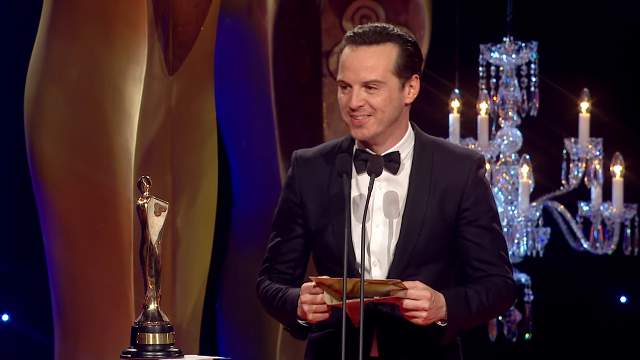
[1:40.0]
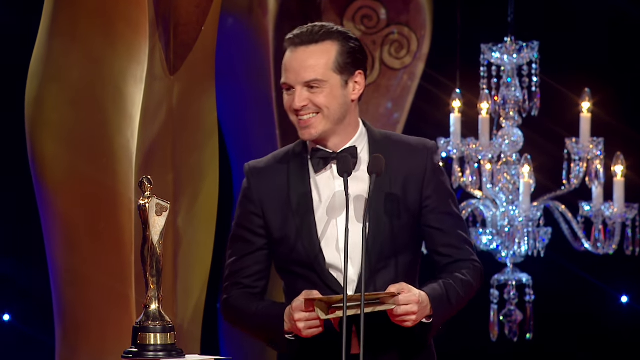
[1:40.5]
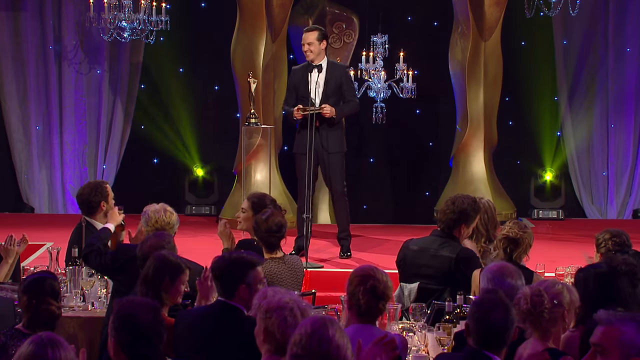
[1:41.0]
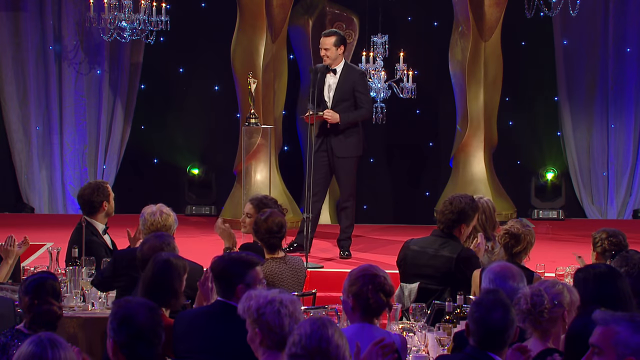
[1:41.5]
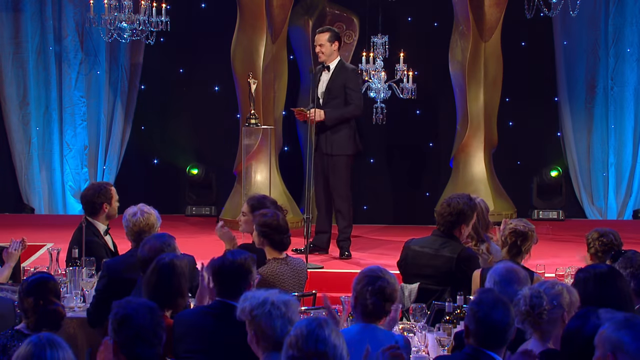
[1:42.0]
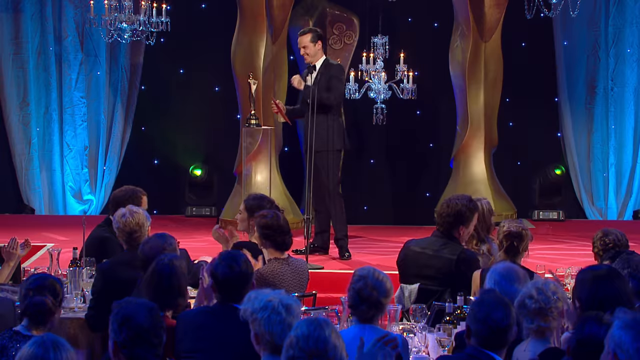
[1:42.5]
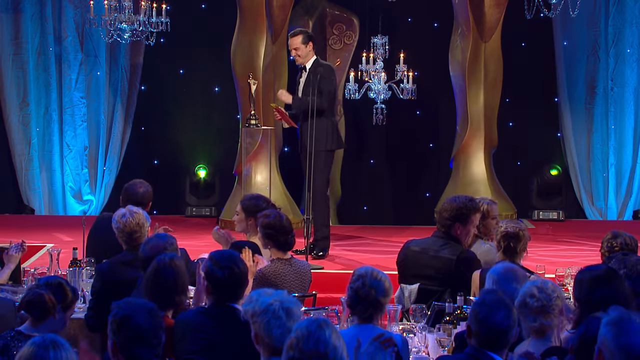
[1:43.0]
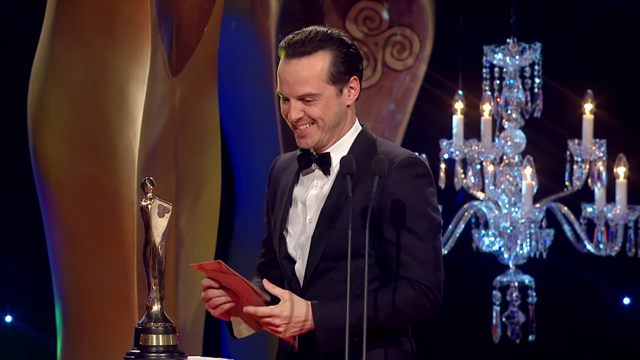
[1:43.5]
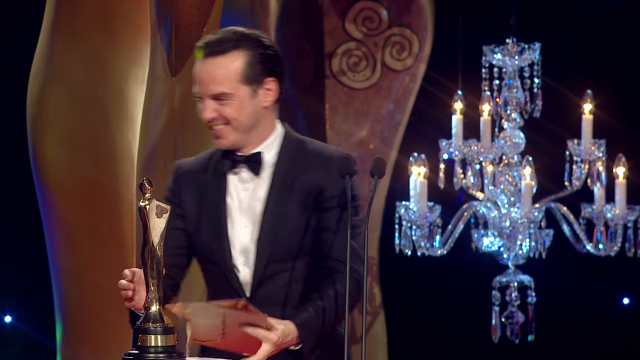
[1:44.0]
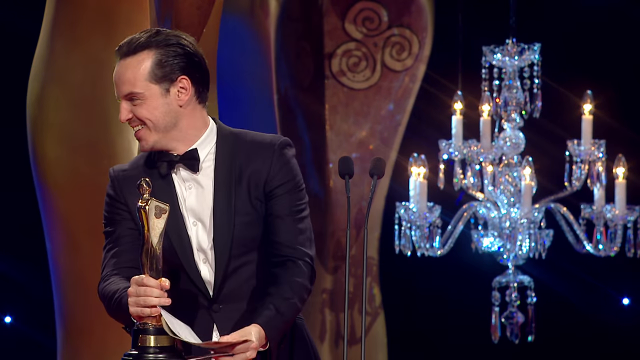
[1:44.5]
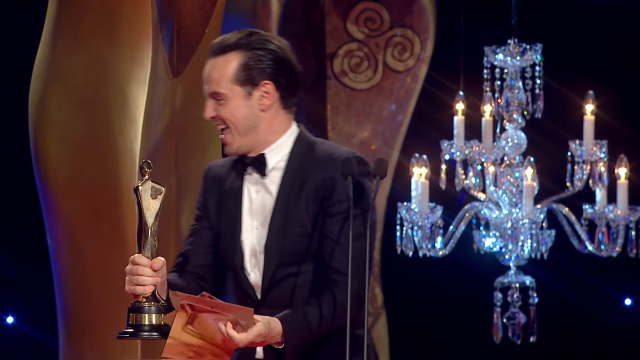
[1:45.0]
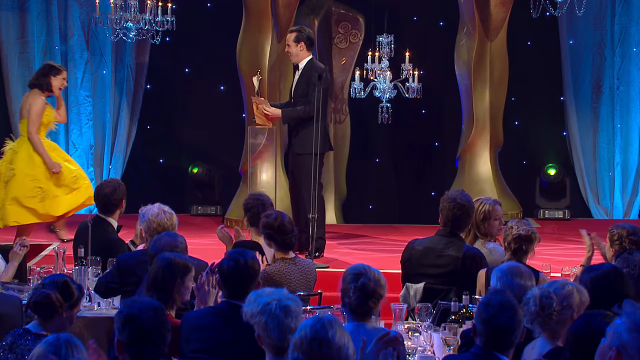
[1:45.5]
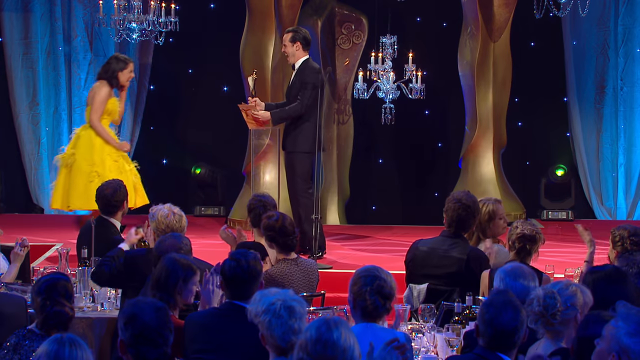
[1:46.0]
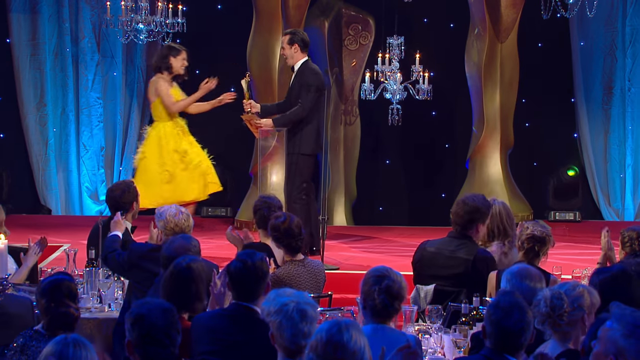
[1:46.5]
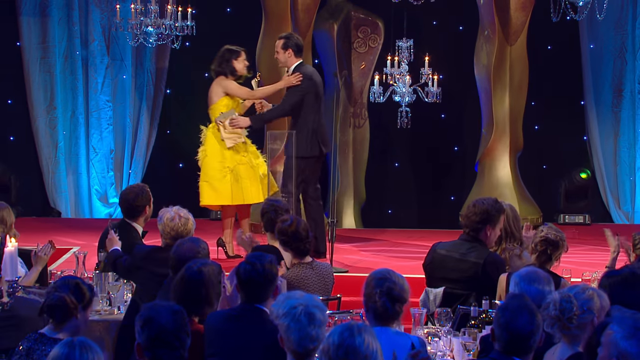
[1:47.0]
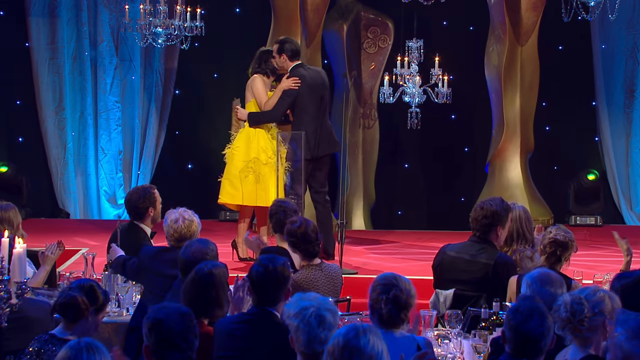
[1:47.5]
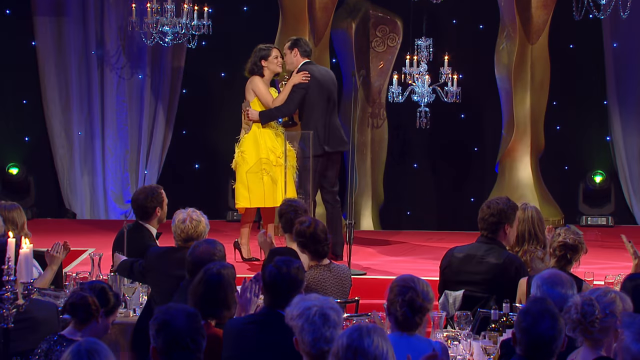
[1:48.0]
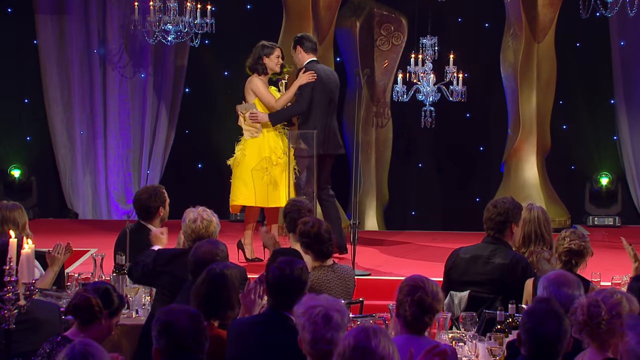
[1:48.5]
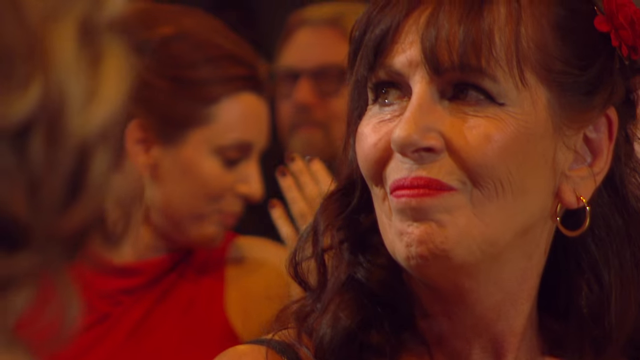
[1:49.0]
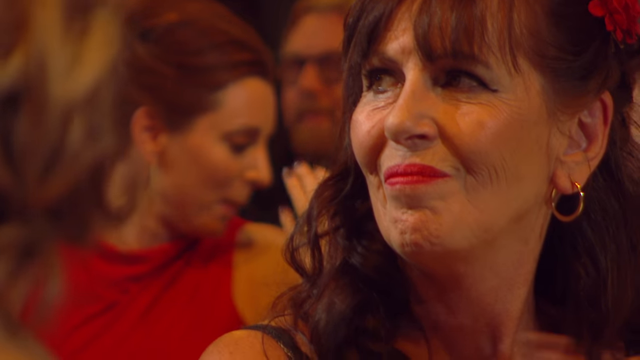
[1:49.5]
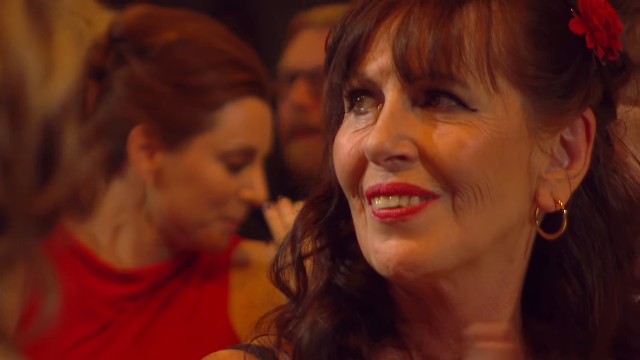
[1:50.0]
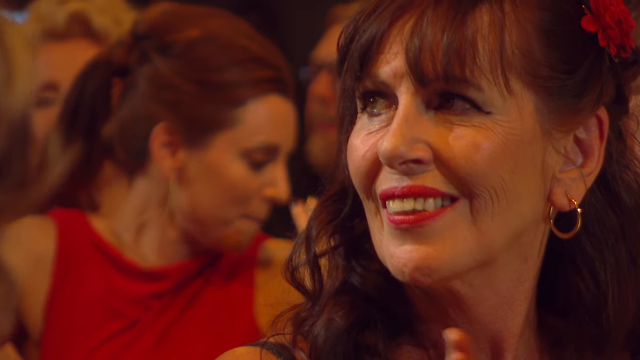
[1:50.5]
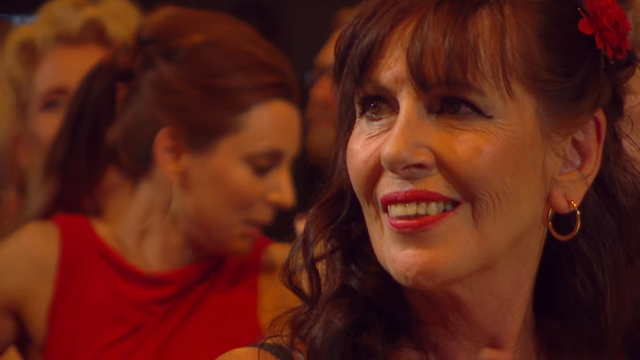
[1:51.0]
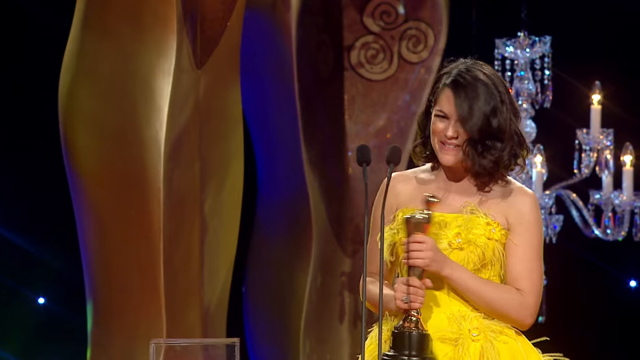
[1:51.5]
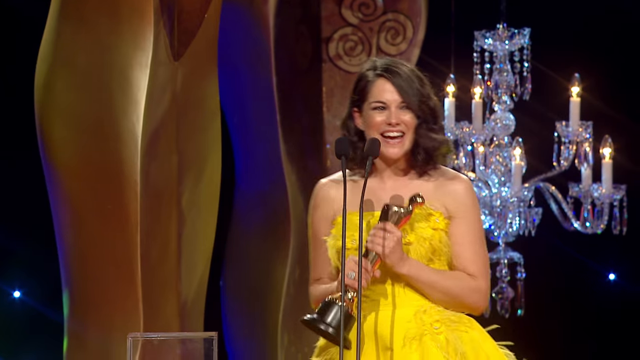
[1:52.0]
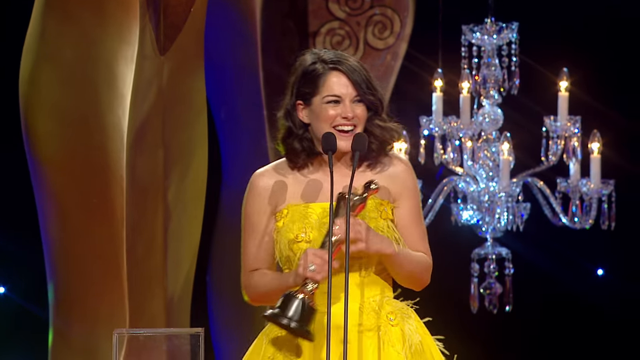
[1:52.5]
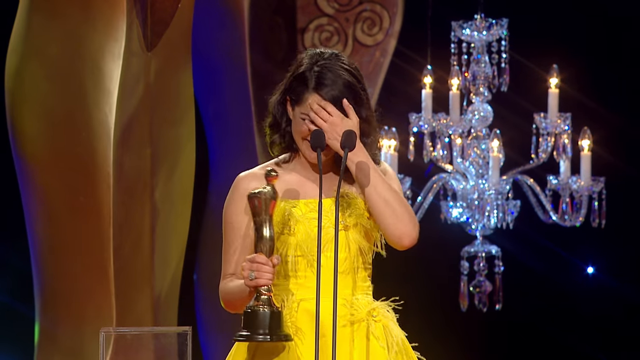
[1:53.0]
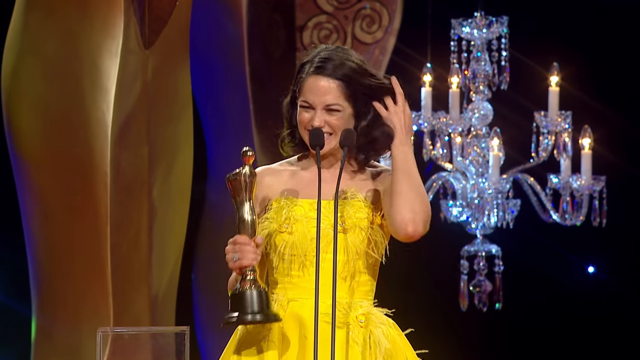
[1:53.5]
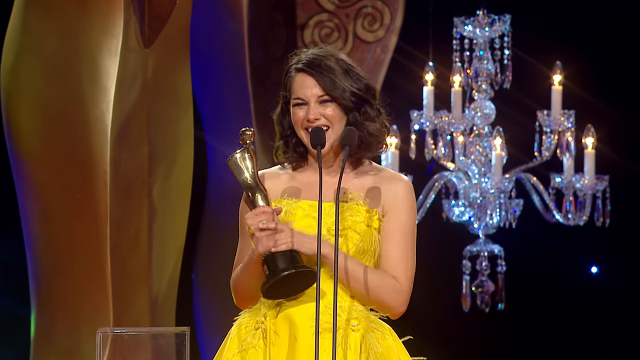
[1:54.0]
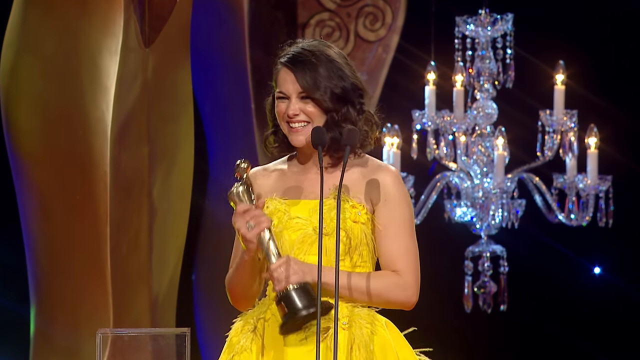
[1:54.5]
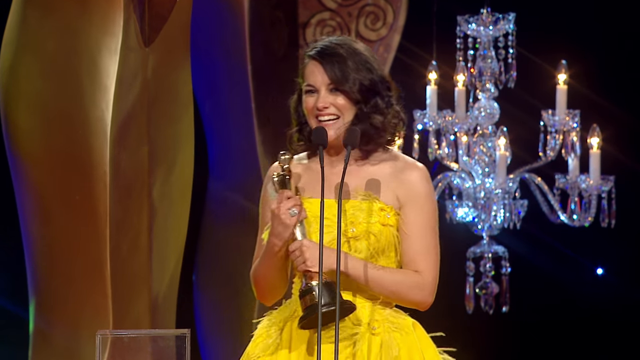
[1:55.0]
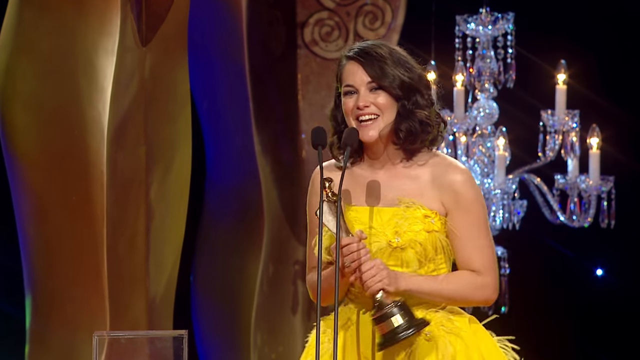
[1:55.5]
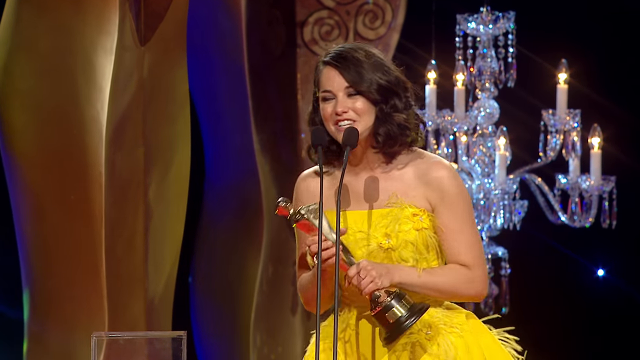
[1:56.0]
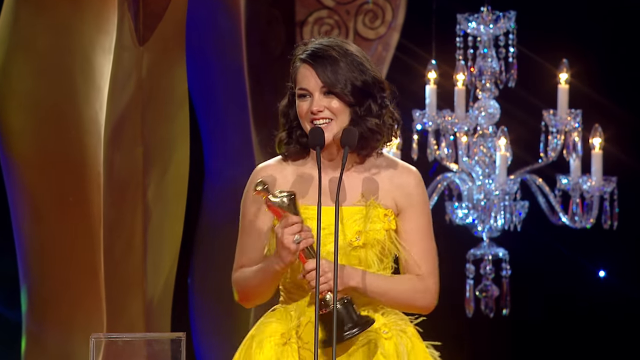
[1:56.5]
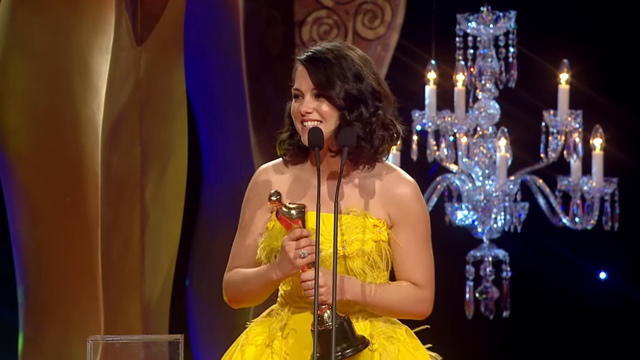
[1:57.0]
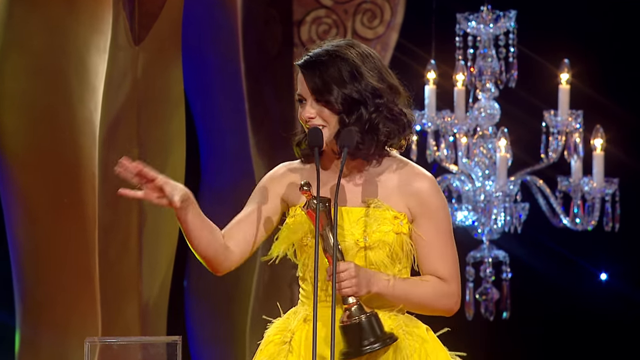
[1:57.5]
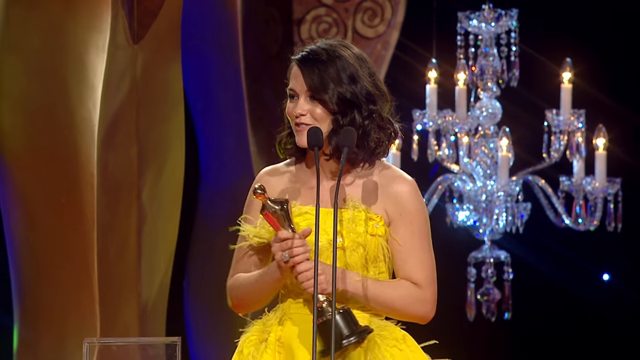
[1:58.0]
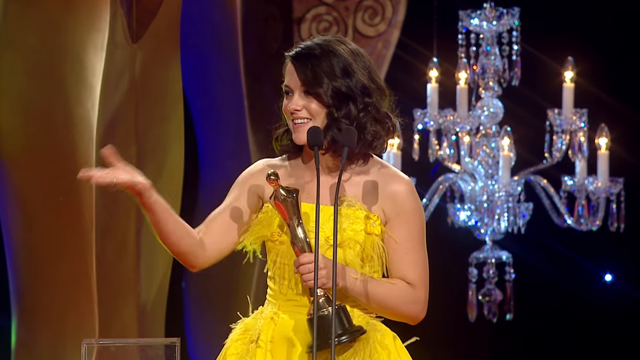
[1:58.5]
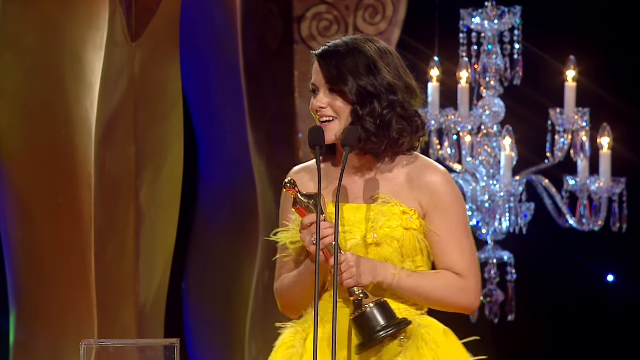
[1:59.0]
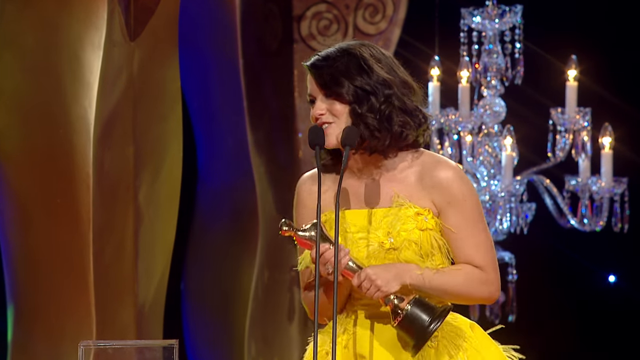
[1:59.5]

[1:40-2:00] The man in the black tuxedo, with a black bow tie, stands on the red stage holding a red envelope, which he opens, apparently to read the Supporting Actress Award. The trophy is next to him and chandeliers are behind him. To the left are wavy gold-looking arches and some blue ones. He reads the name, everybody starts clapping, and he waits for someone to come onto the stage. A brown-haired woman in a bright yellow dress and black shoes comes up to the mic and starts talking to the audience, making a lot of hand movements.